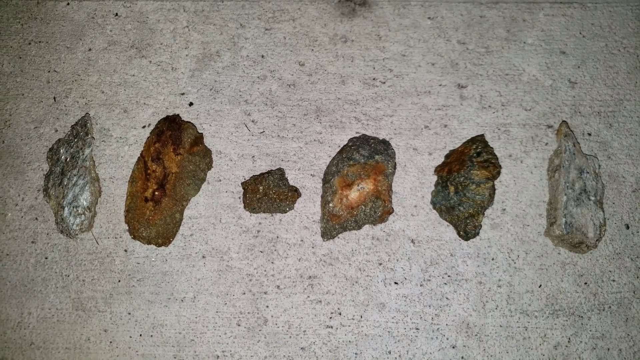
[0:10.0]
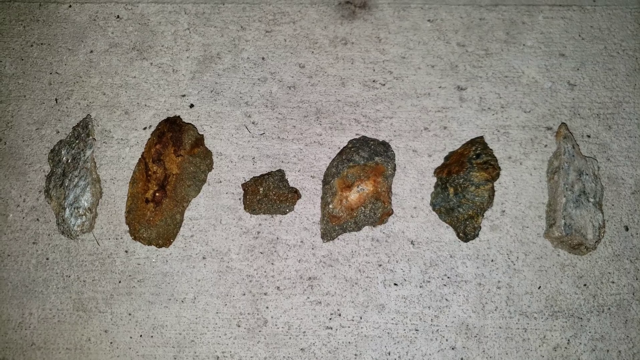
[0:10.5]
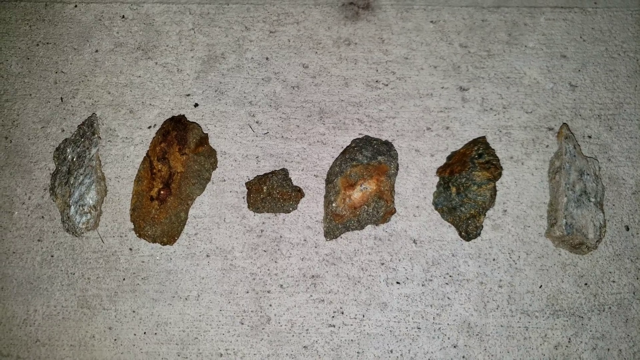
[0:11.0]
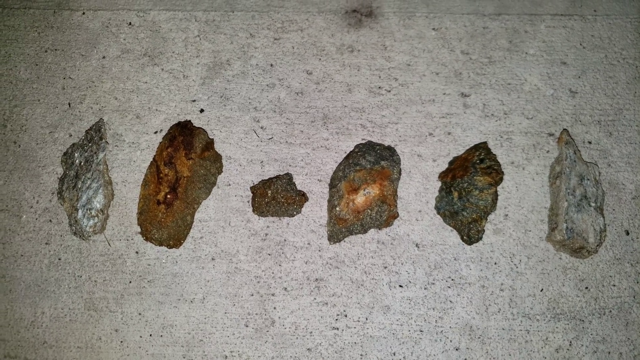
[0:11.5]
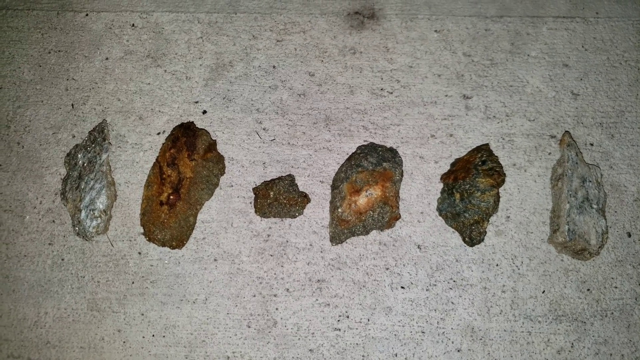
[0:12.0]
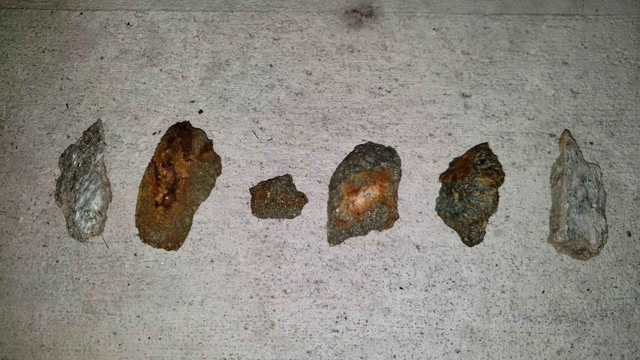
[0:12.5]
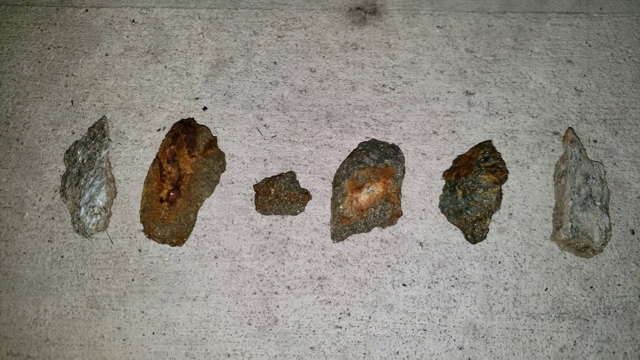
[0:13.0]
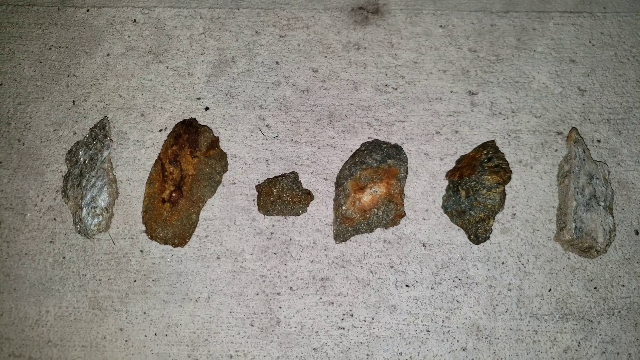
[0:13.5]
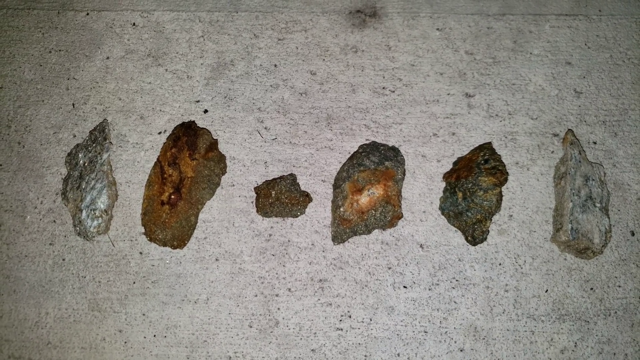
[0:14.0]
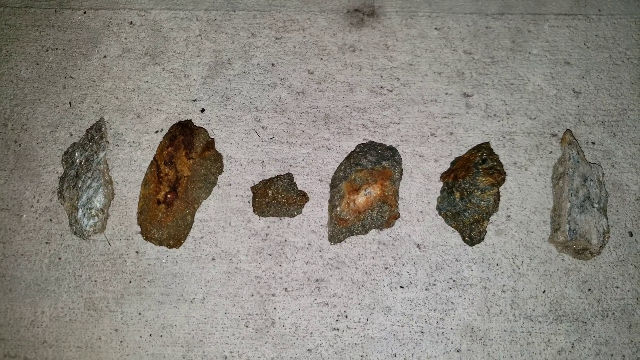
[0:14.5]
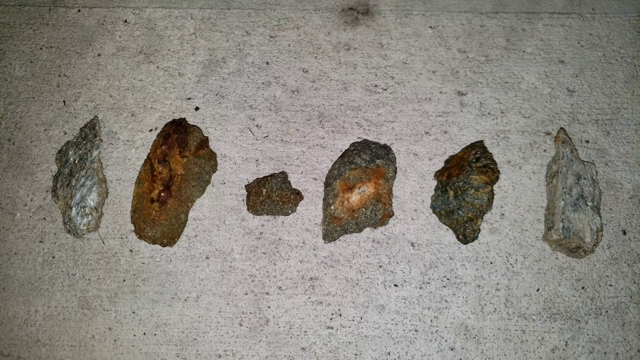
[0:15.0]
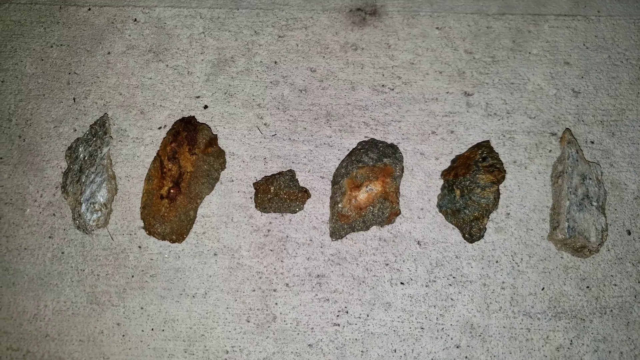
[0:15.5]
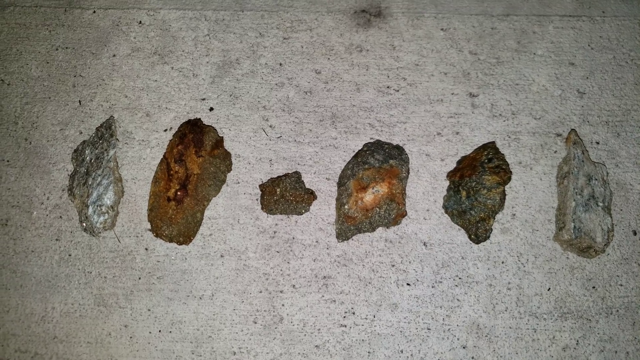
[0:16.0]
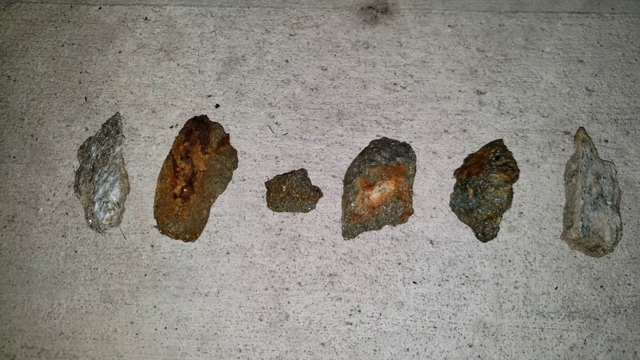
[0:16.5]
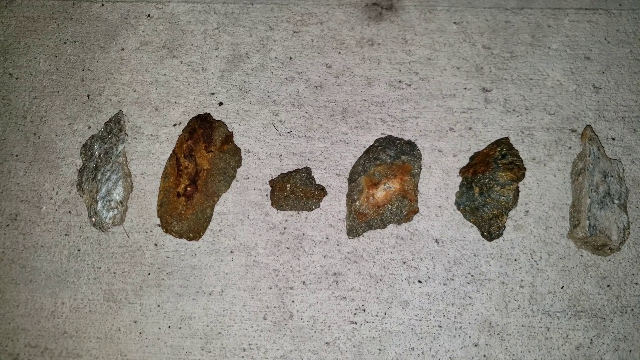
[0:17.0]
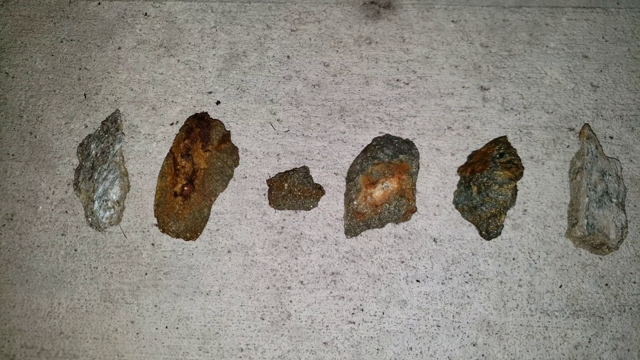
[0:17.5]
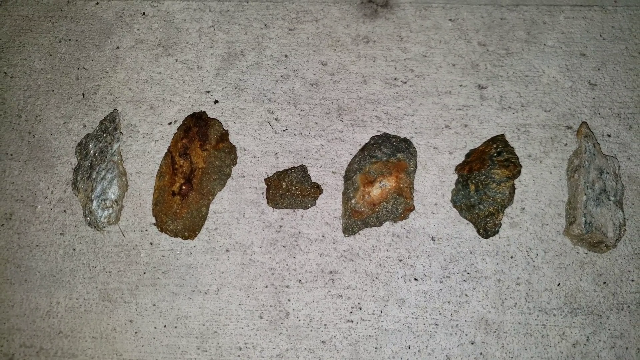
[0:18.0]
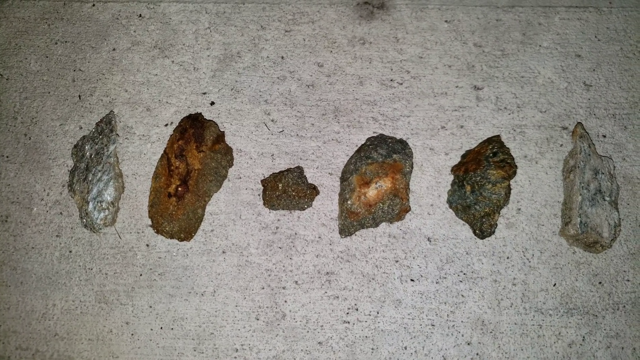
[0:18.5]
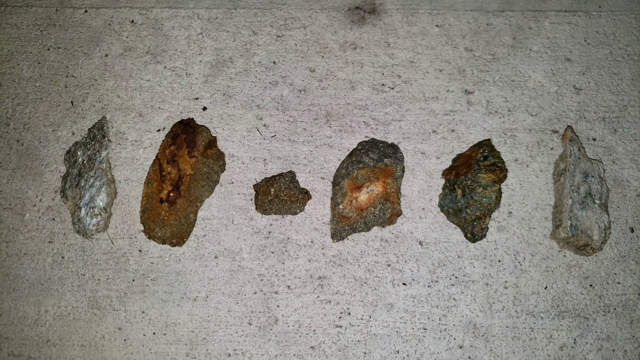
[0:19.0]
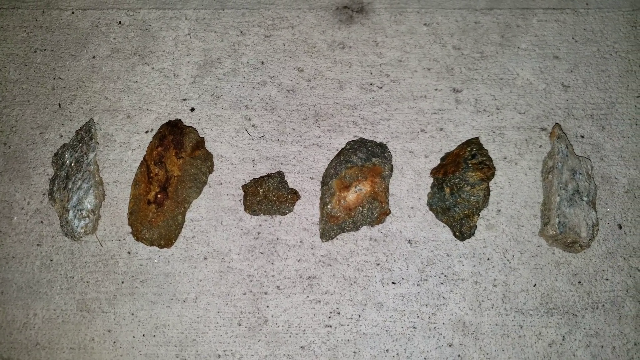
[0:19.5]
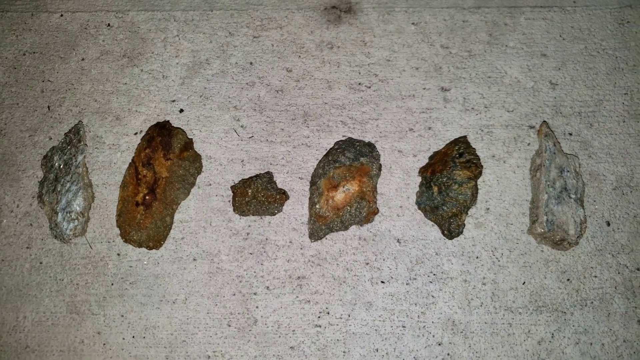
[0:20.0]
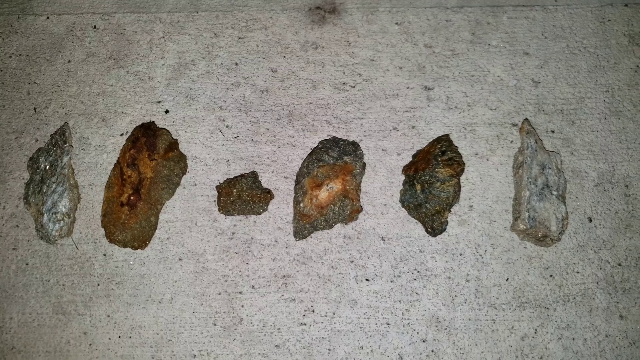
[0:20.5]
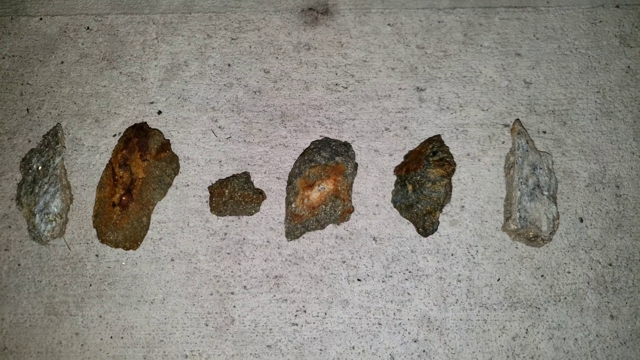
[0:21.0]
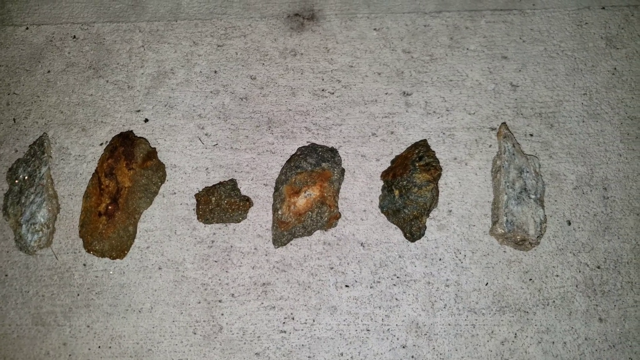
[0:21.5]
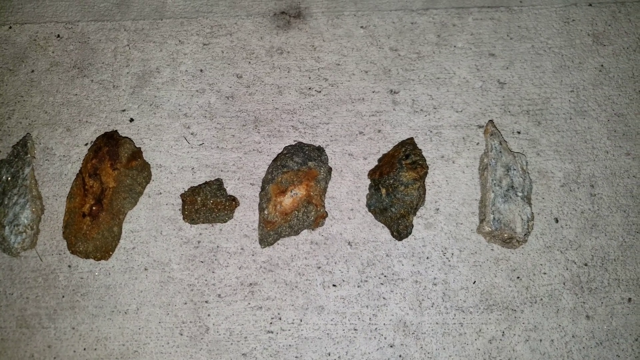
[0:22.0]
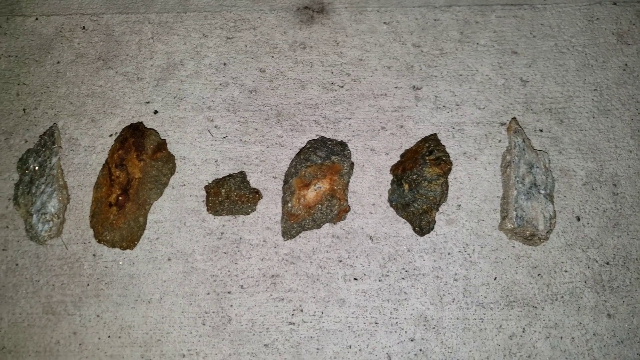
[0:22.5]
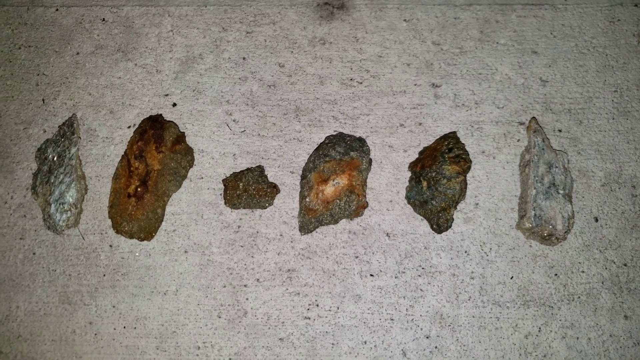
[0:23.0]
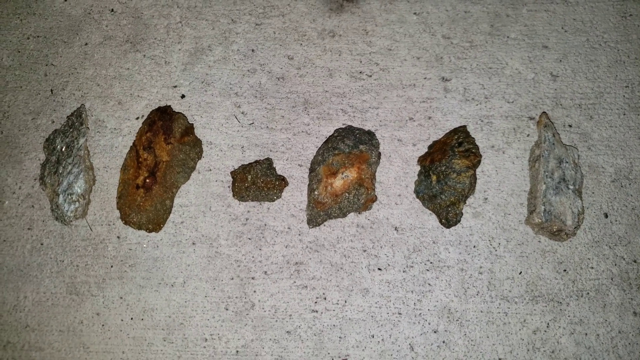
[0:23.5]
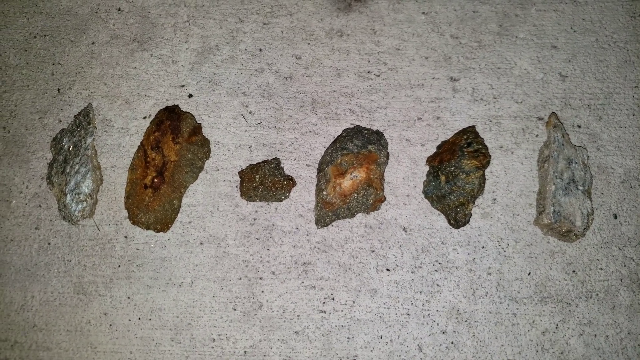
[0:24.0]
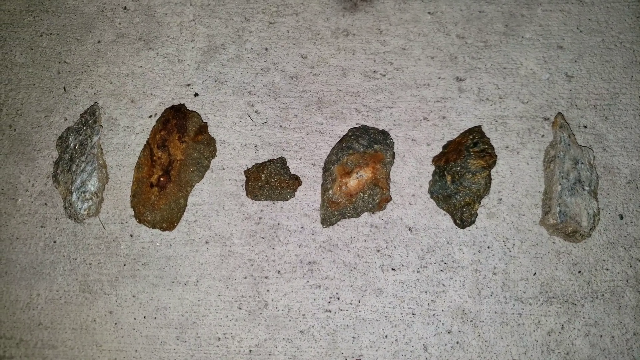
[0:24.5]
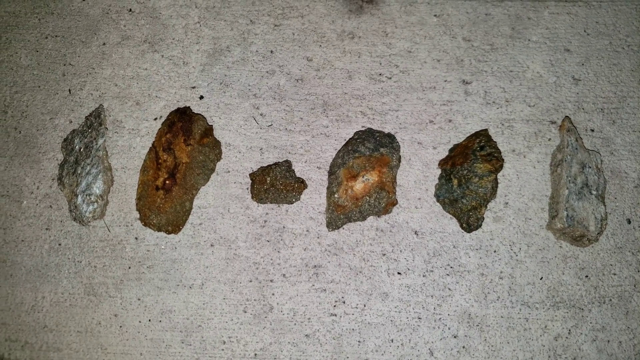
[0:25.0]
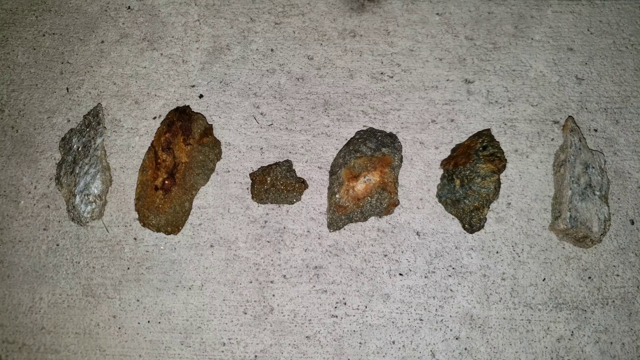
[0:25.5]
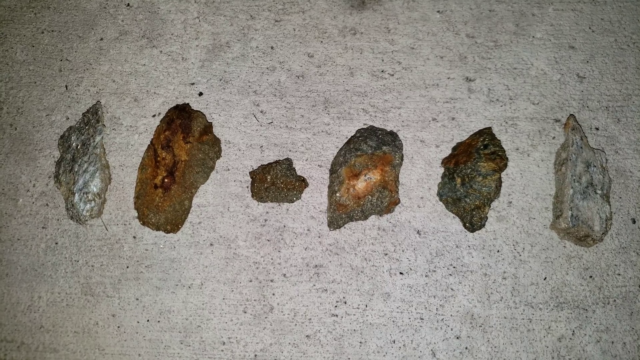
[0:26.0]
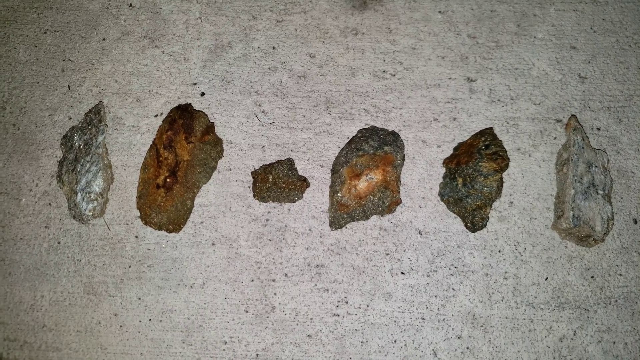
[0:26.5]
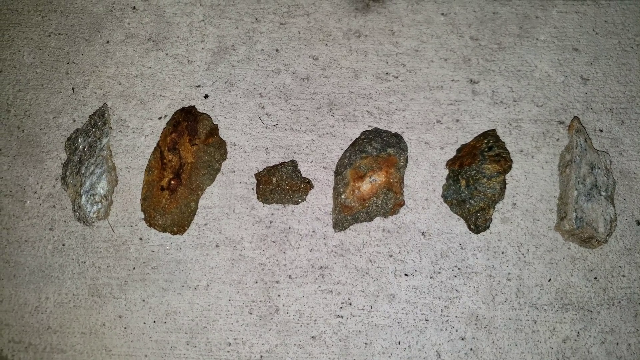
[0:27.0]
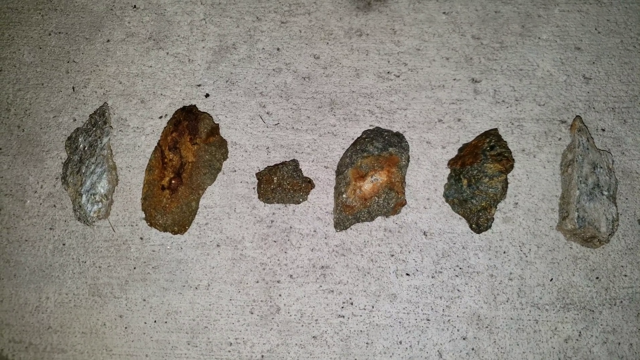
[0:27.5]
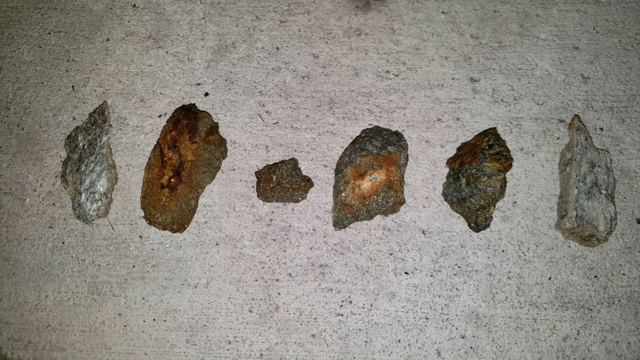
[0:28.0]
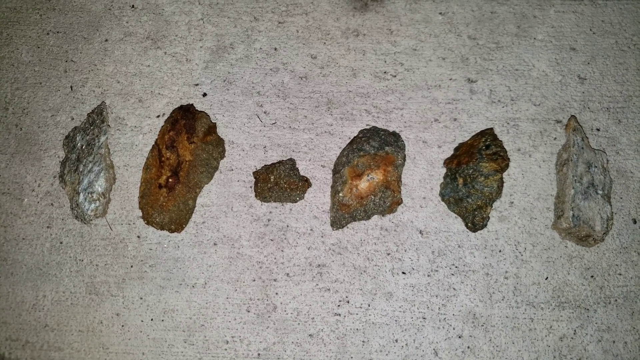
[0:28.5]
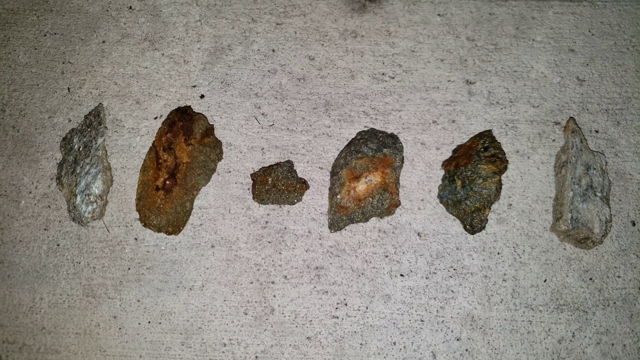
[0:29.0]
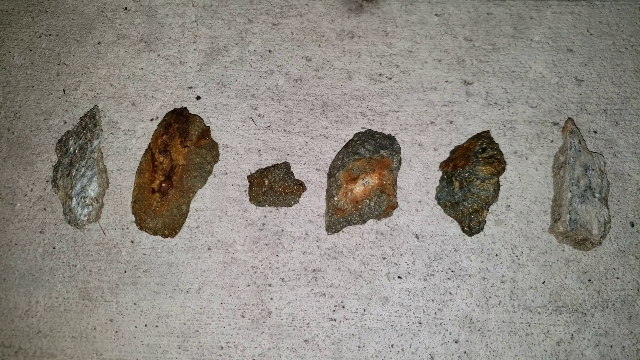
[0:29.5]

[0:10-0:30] The footage of the six individual stones continues, showing them on a white stone surface with black flecks. The stones are placed carefully in a line or row in the centre of the picture. Some have sharp points and some have rounded edges, and one is significantly smaller than the other five. Their colours vary: the first is silver, the second more brown, the third, small stone is grey and brown, and the next is grey with some brown to the centre. The fifth stone is middle-sized relative to the rest and has points at both ends. The sixth stone is lighter in colour, a mix of white and grey, with a point at the top and a more rounded edge. The camera shakes slightly.